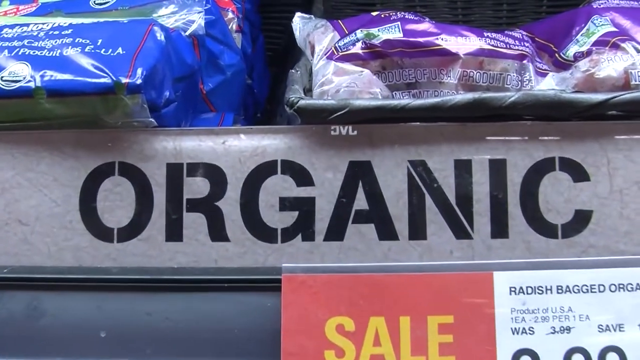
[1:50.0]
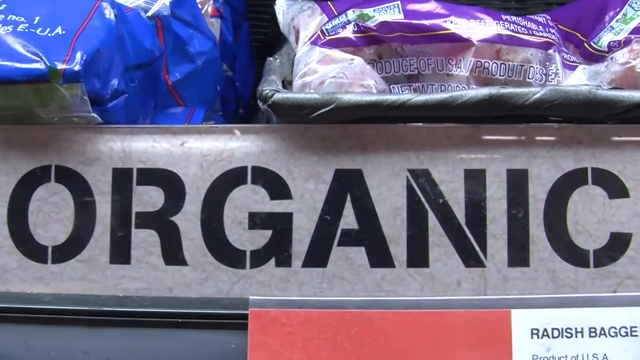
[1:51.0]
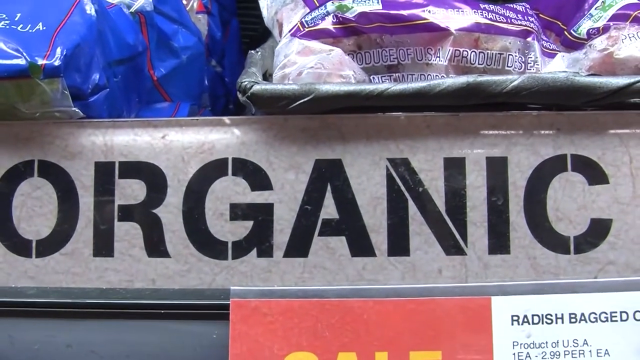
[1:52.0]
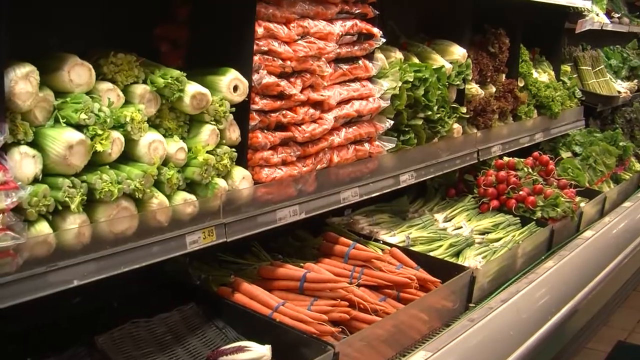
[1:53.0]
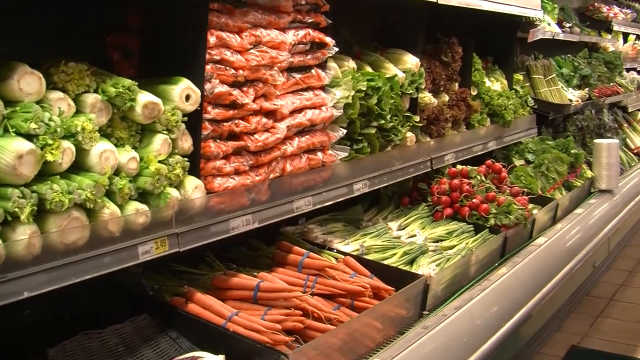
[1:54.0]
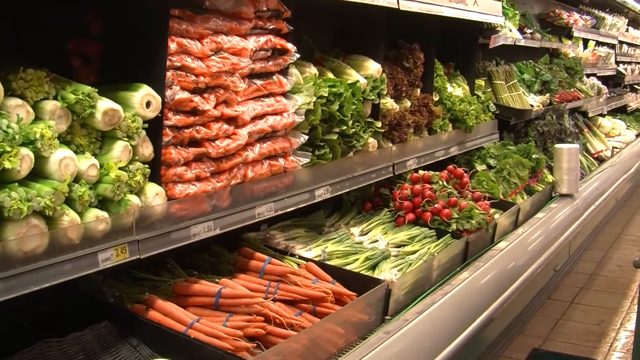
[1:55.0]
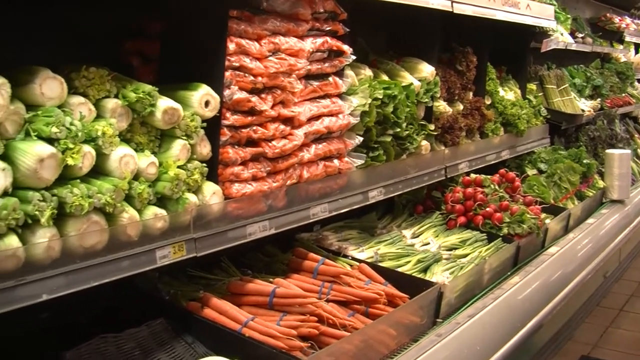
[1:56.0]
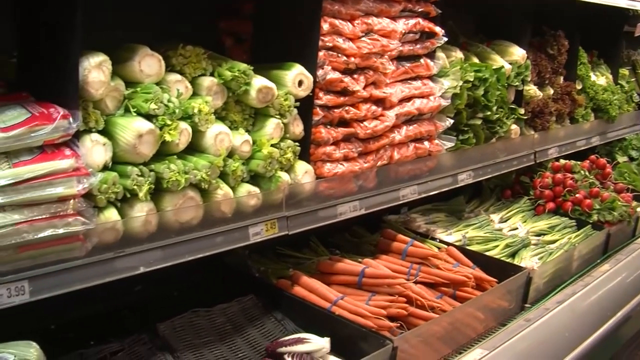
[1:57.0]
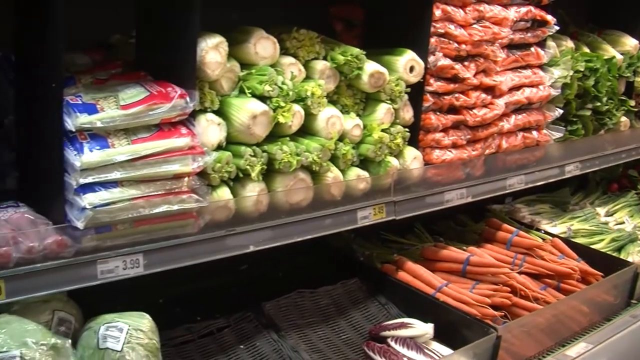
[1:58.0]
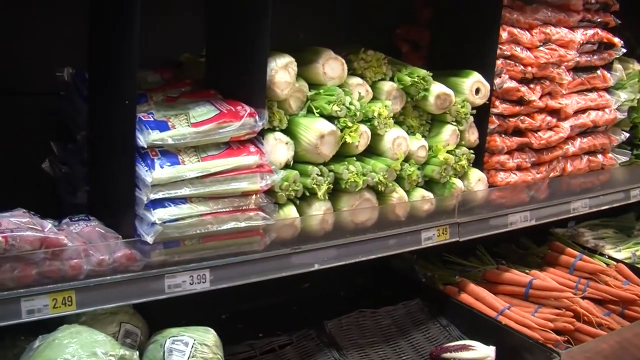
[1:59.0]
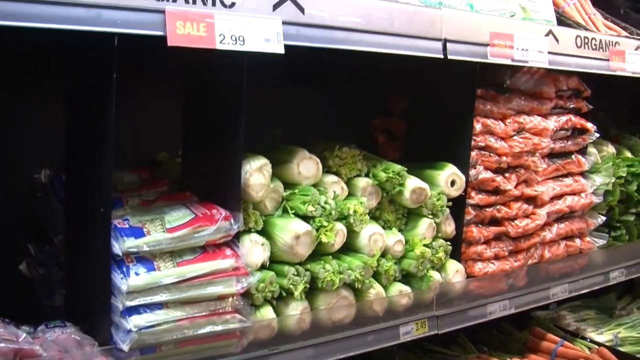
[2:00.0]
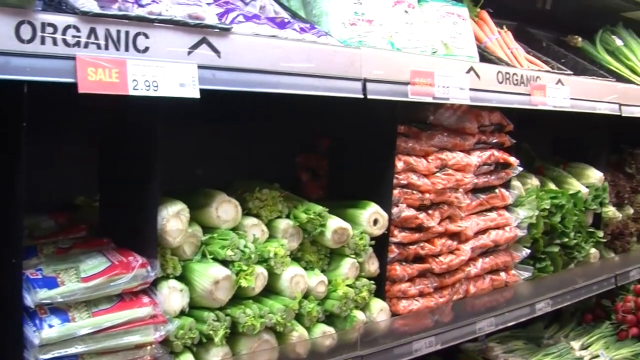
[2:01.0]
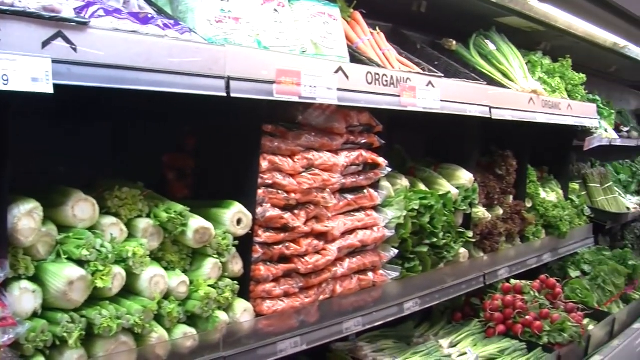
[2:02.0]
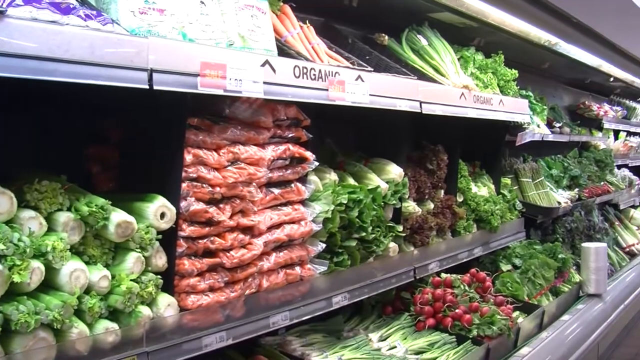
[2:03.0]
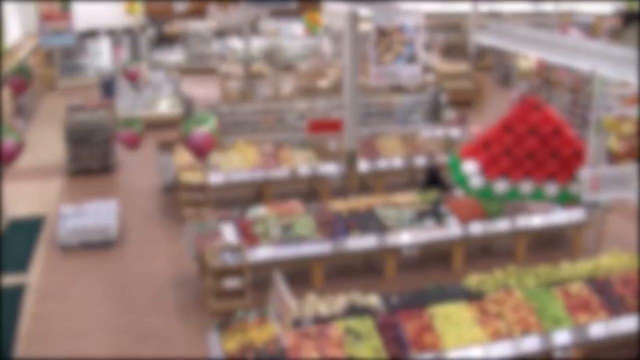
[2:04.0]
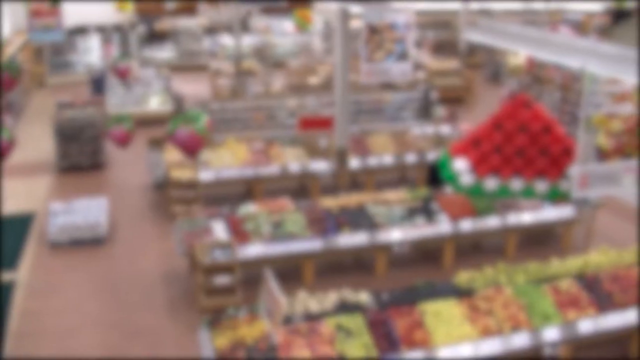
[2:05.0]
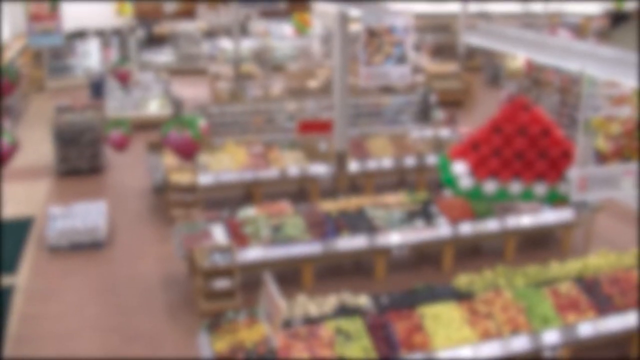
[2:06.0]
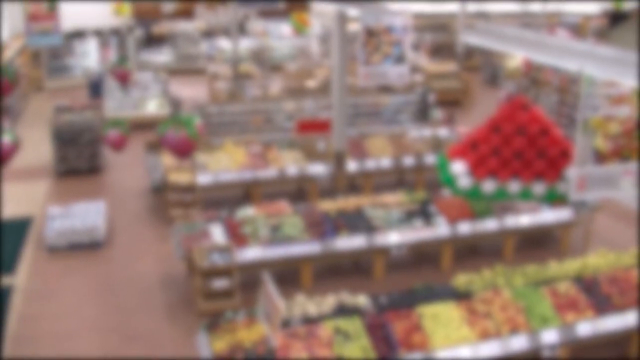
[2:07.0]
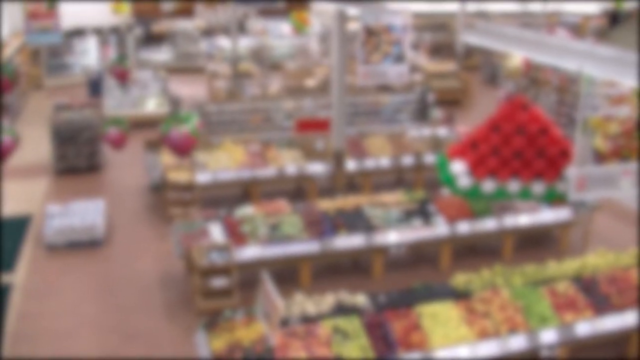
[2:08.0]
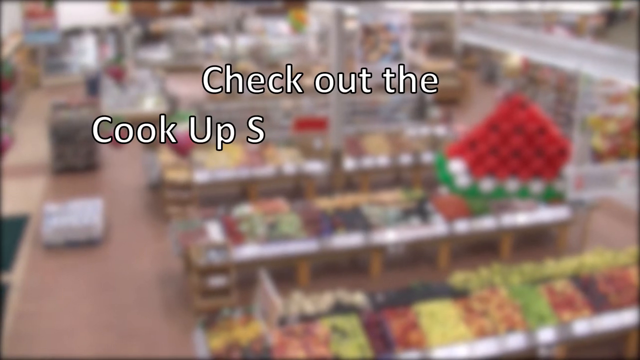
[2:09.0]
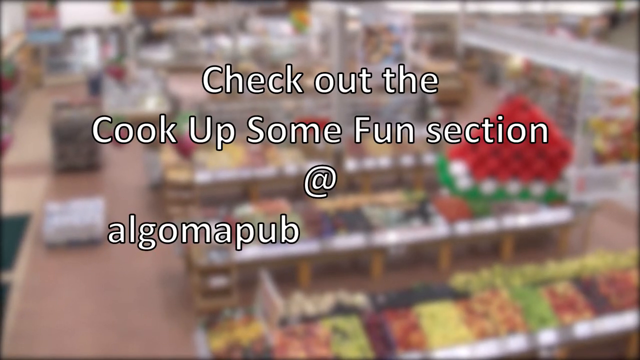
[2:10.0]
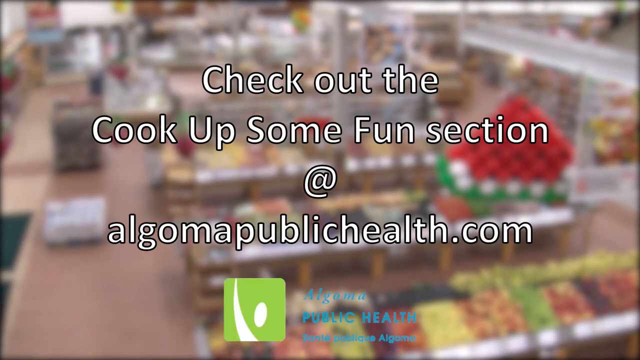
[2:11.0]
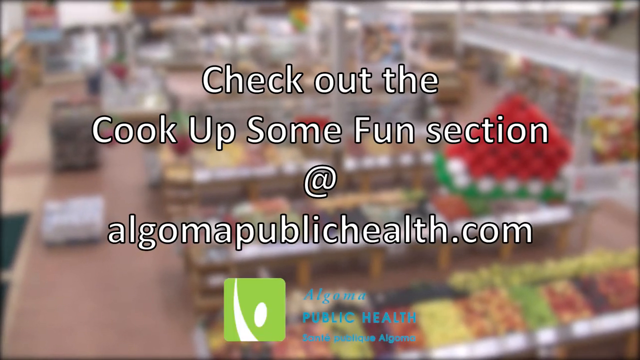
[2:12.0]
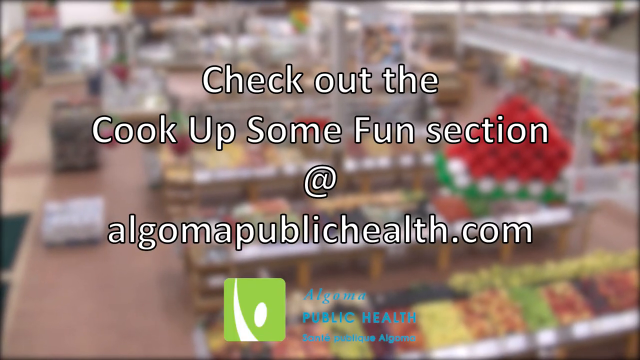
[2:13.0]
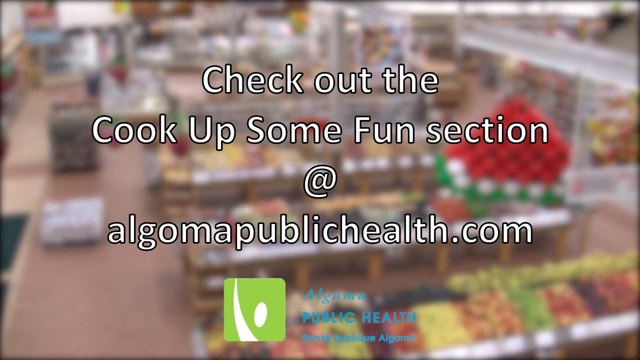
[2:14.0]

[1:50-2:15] The camera focuses on and zooms in on the word "organic" in a produce aisle, with a number of bagged produce items above it under fluorescent lighting. A wide-angle shot then shows another produce section with what looks like romaine lettuce, stacks of bags of carrots with bundles of carrots underneath, celery, radishes, red cabbage and various other produce items. The camera pans to the right and back to the left, showing slightly more produce, and moves up, revealing the organic label above these items. Next is an overhead view above a number of aisles; it is very blurry, but produce and fruit items are visible in the center of the screen. The blurred background remains as white lettering in the foreground reads "check out the cook up some fun section at AlgomaPublicHealth.com". The Algoma Health logo then appears at the bottom center of the screen, with a green logo on the left and blue lettering on the right, and the shot lingers on this text.